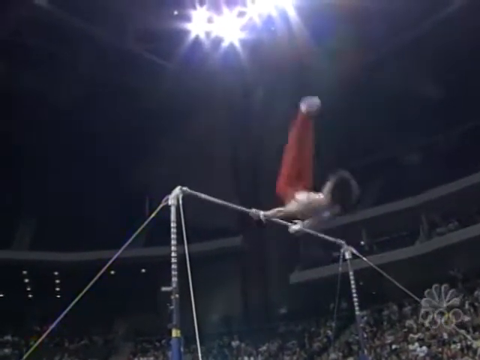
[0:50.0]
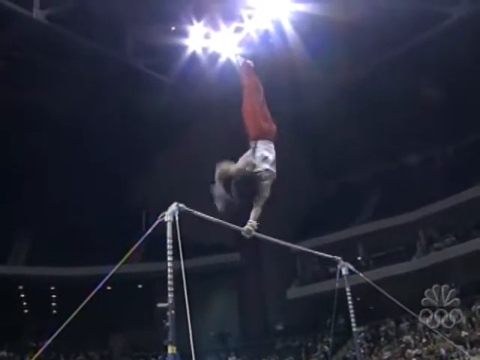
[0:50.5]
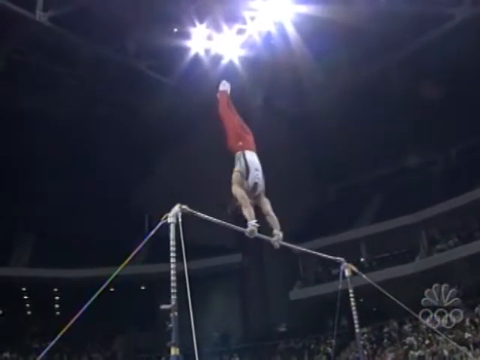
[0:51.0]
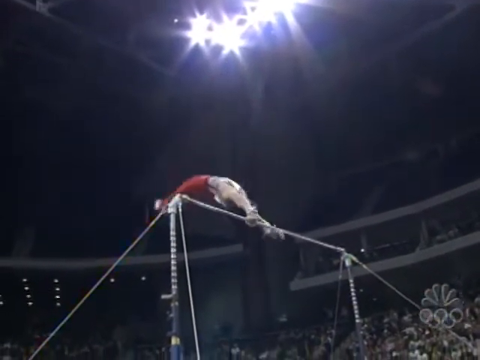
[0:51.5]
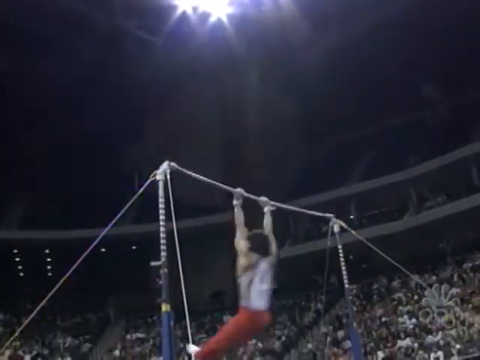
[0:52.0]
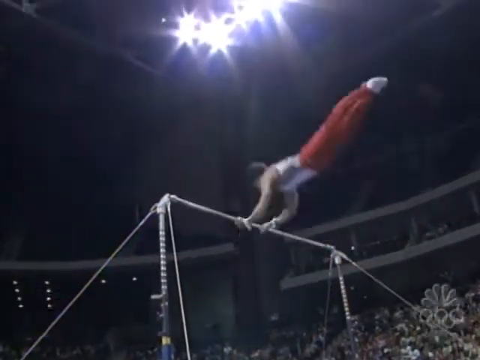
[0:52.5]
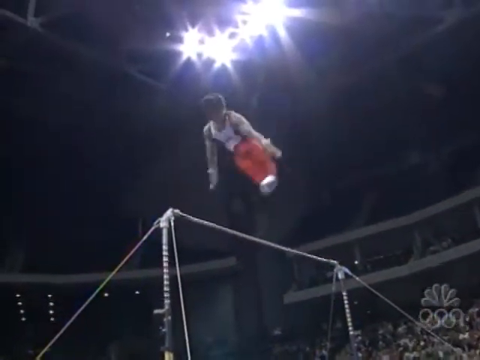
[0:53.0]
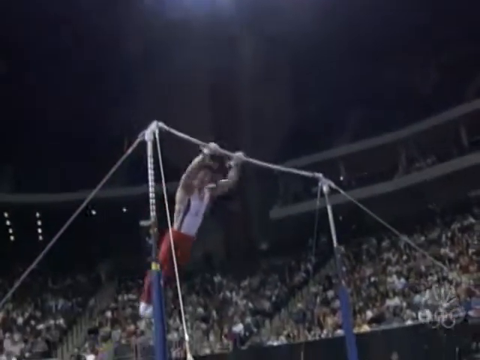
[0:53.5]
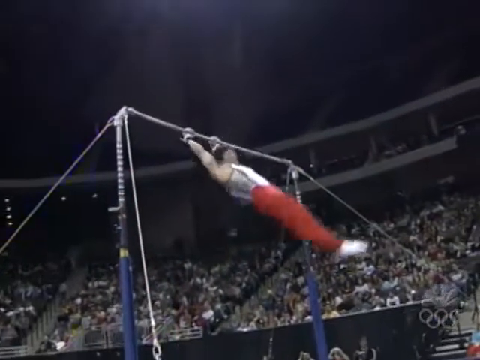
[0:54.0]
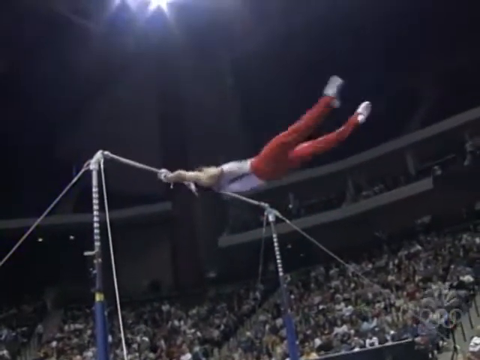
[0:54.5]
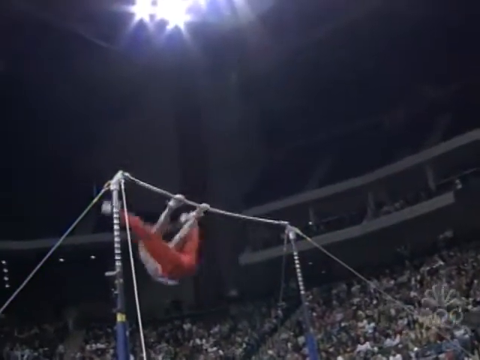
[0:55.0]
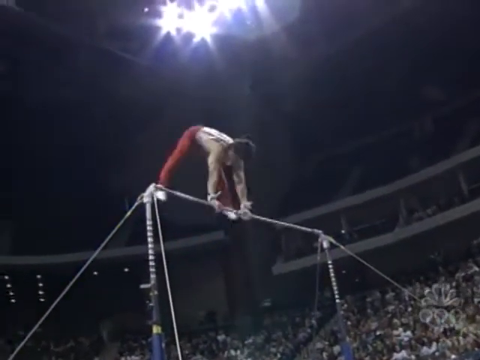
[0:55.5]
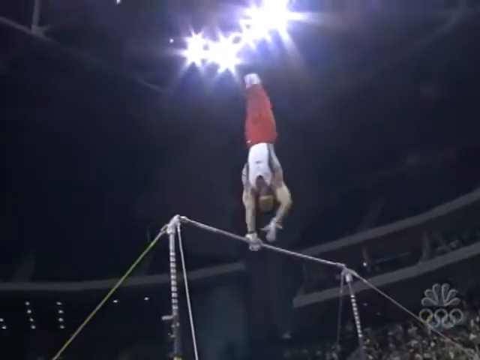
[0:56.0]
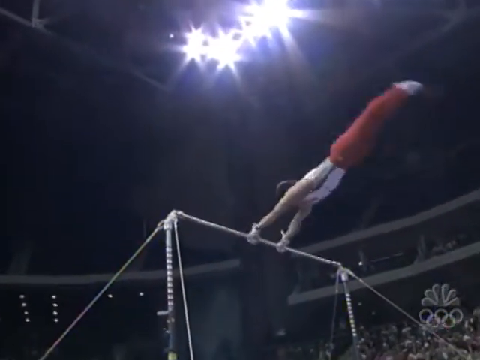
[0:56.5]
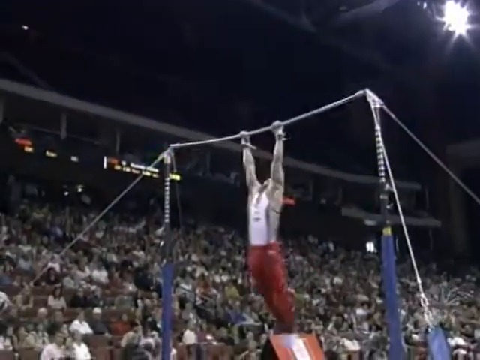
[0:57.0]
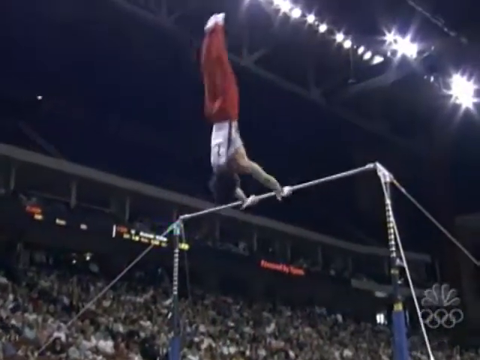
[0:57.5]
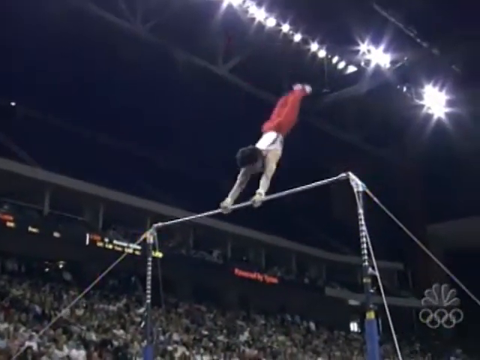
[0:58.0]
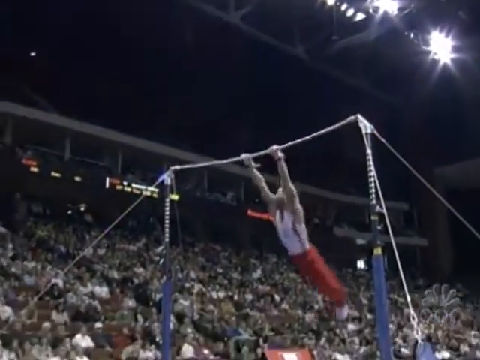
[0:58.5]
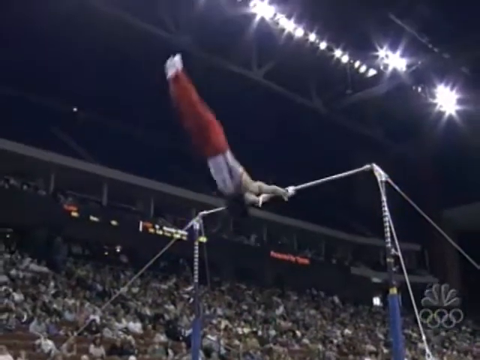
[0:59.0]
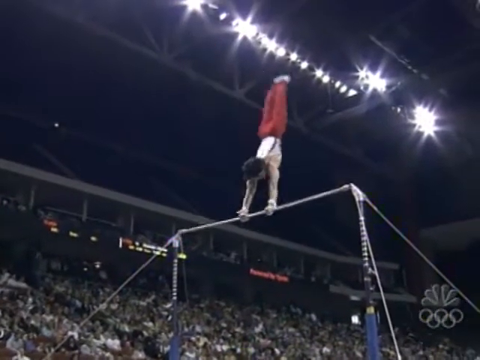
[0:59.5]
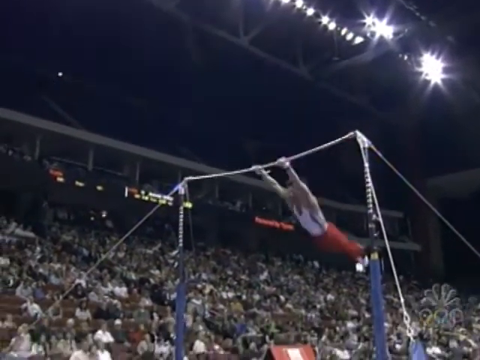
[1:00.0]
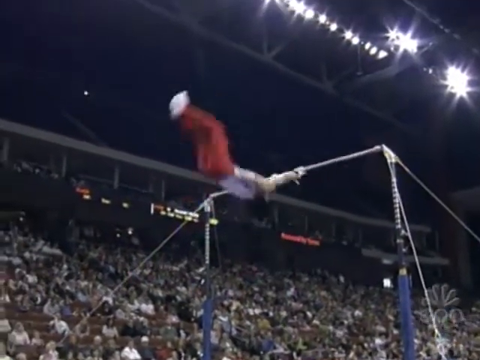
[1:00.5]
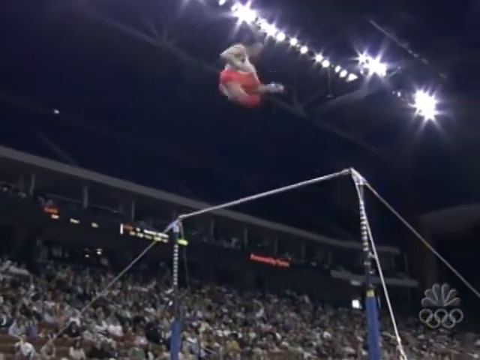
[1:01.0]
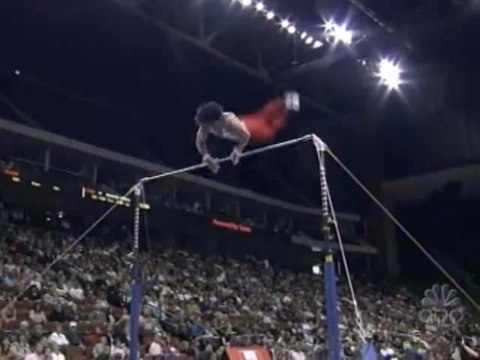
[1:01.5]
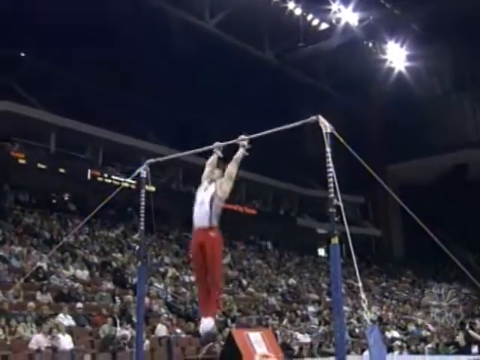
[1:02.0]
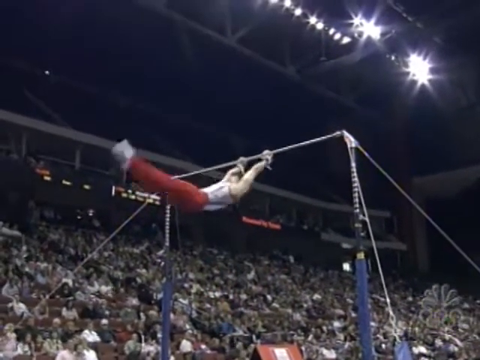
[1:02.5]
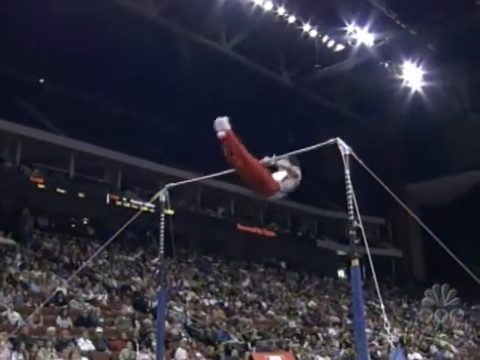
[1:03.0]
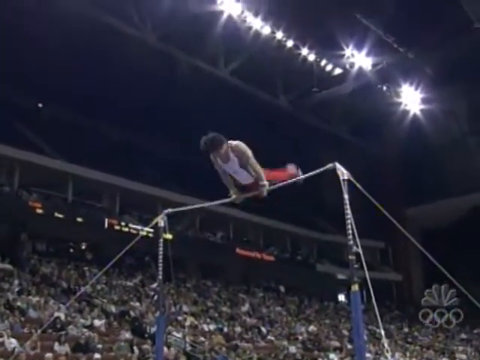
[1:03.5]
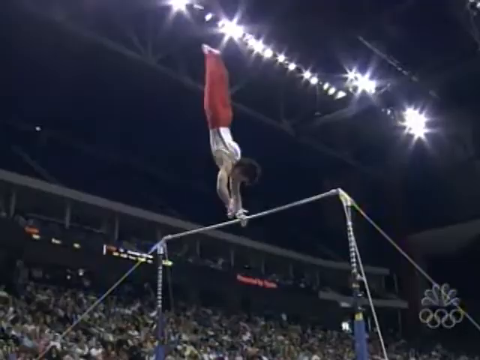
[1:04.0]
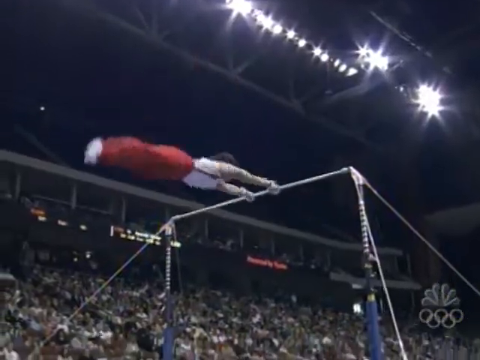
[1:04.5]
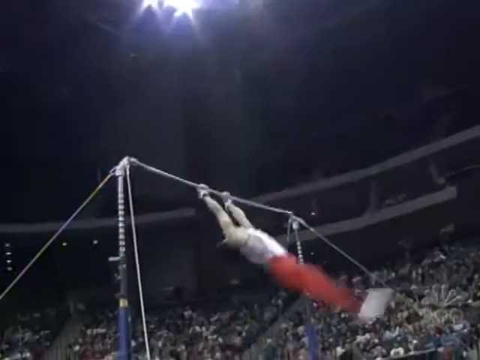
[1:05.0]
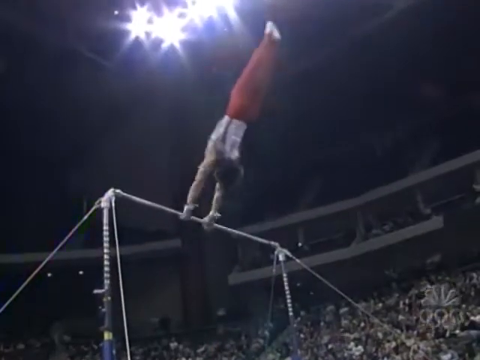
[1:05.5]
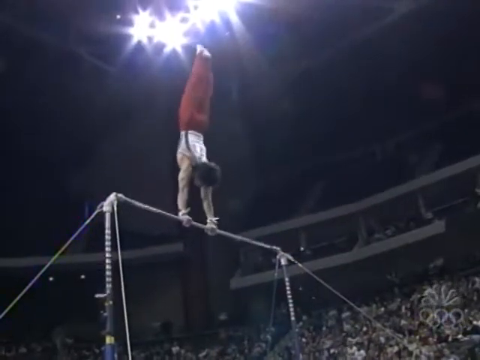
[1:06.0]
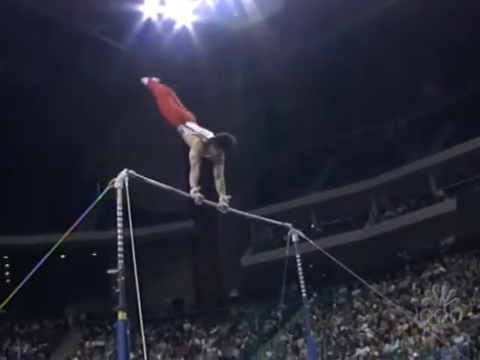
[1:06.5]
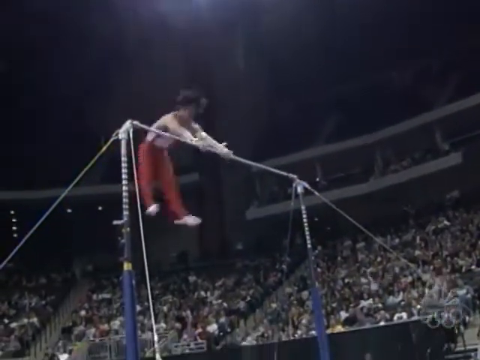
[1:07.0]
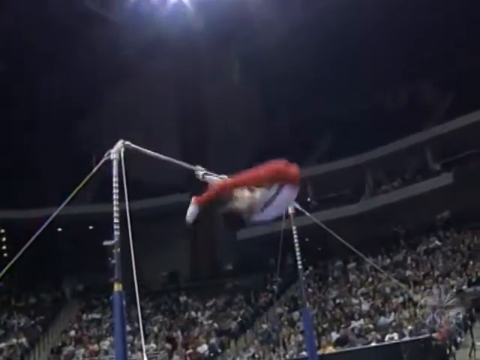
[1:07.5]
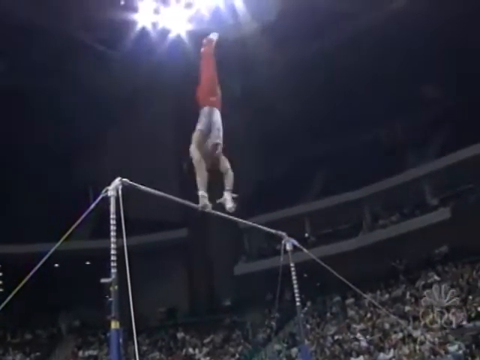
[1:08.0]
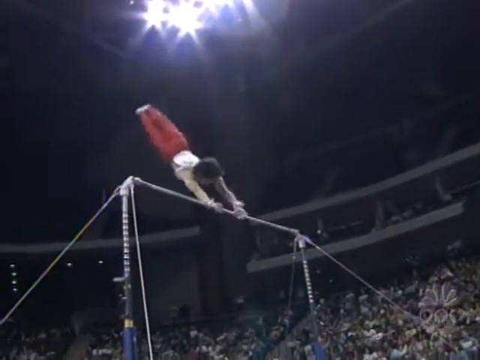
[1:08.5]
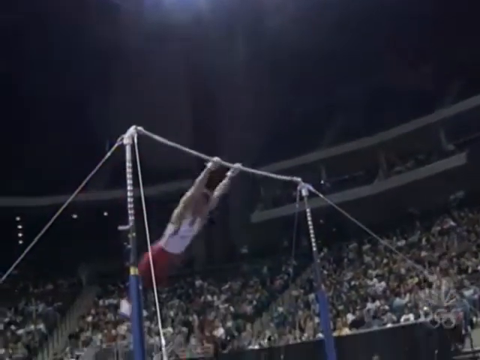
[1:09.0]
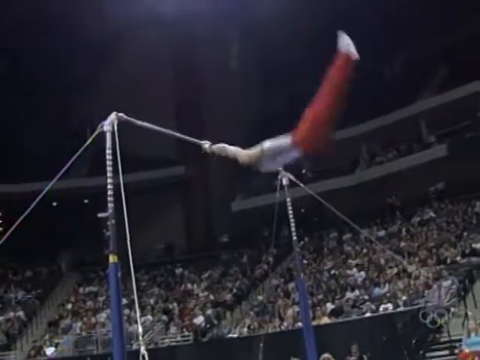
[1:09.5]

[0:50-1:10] From a handstand position on the bar, the athlete lets go of the bar with his right hand and spins his body around without holding it with that hand. After a full 360 spin he holds the bar again, now with his body facing the other direction, and falls down around the bar. Gaining momentum, he spins from the bottom upwards and fully lets go of the bar, so he is in a middle position not holding on to anything, quite some height above the bar. As he falls, he reaches his arms out in front of him and grabs the bar again with both hands. He swings to the front and to the back with his legs closed; when he swings to the front and then to the back he opens his legs, and as he goes up he closes them again. In the handstand position he removes his right hand again as he spins, then holds the bar again.